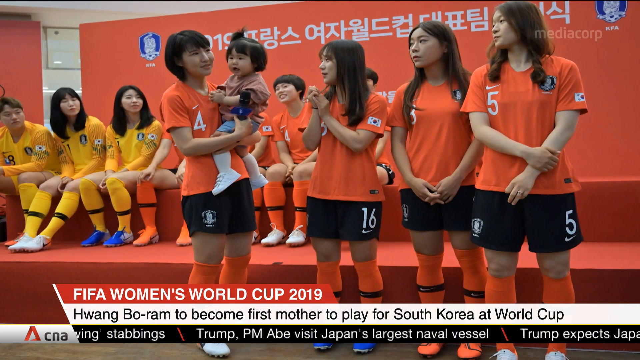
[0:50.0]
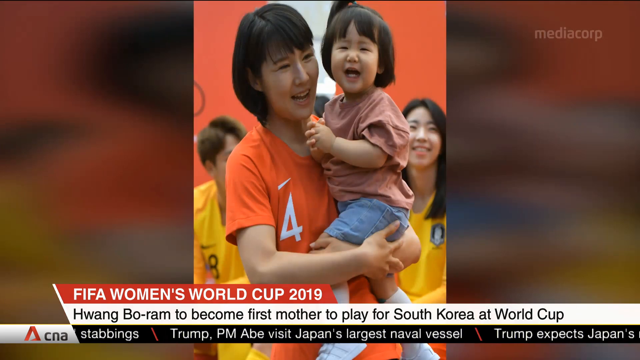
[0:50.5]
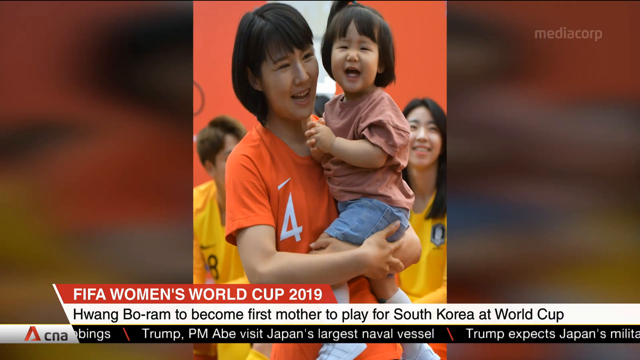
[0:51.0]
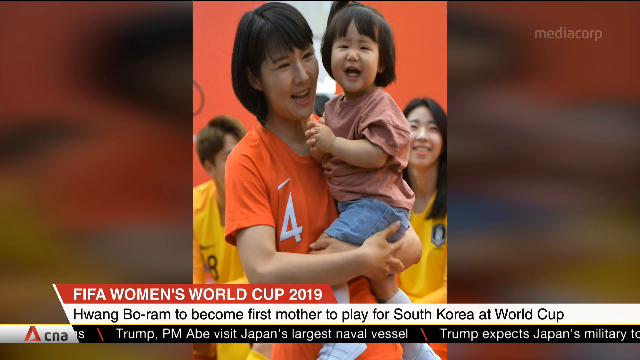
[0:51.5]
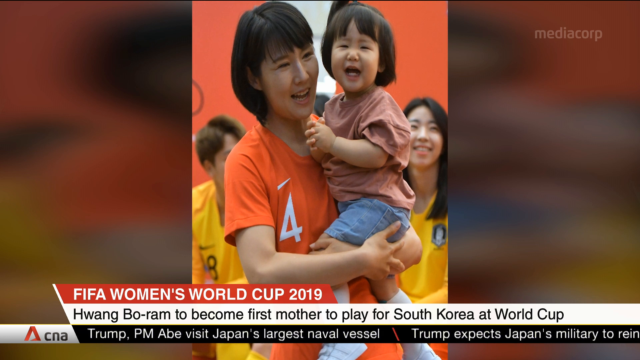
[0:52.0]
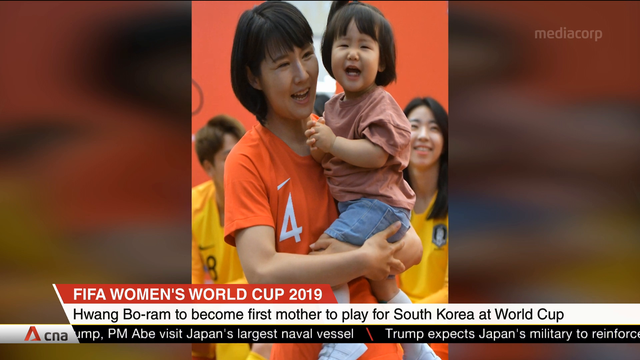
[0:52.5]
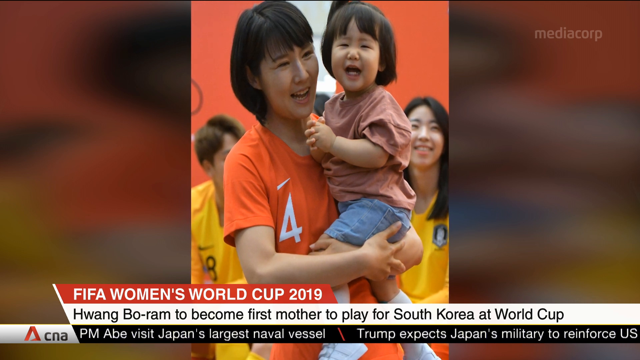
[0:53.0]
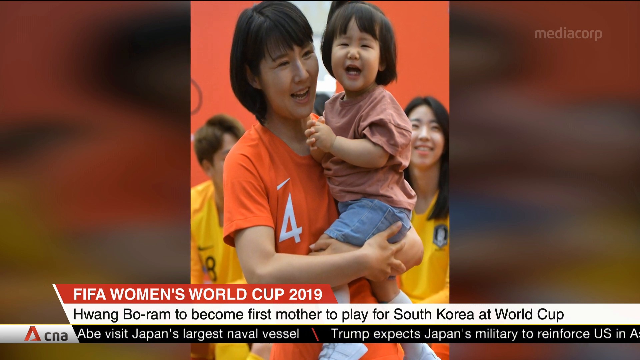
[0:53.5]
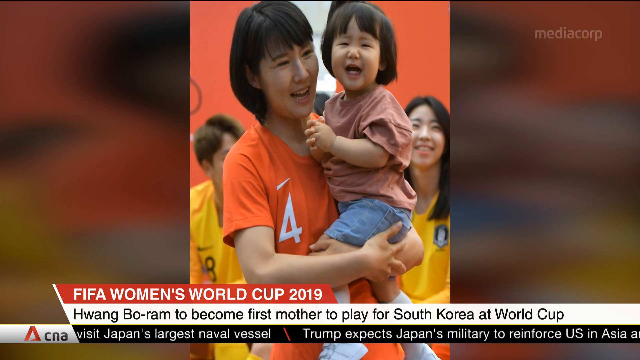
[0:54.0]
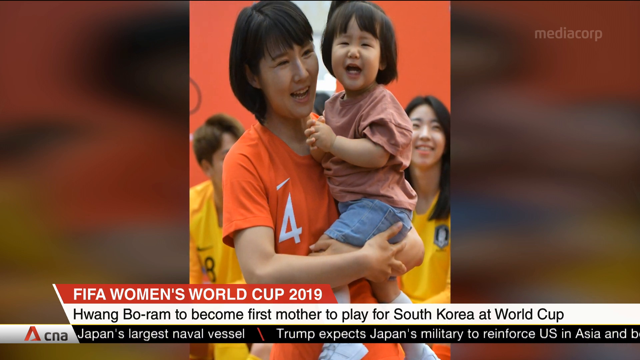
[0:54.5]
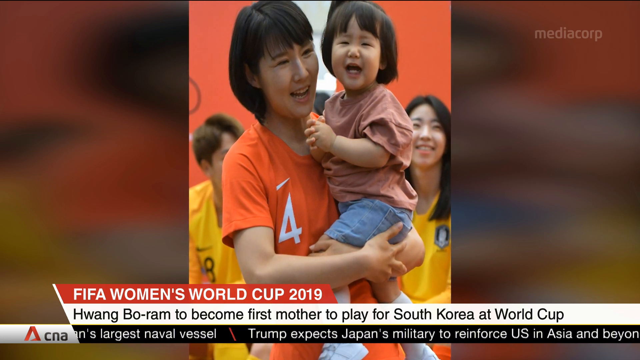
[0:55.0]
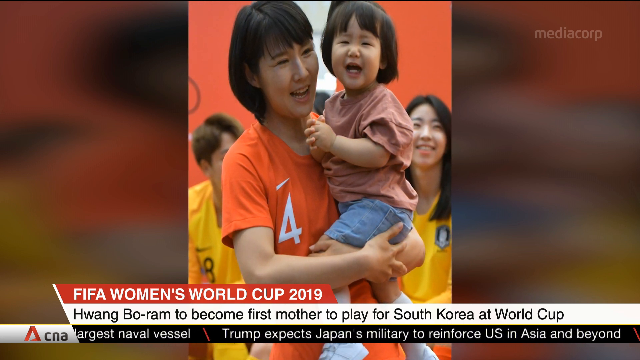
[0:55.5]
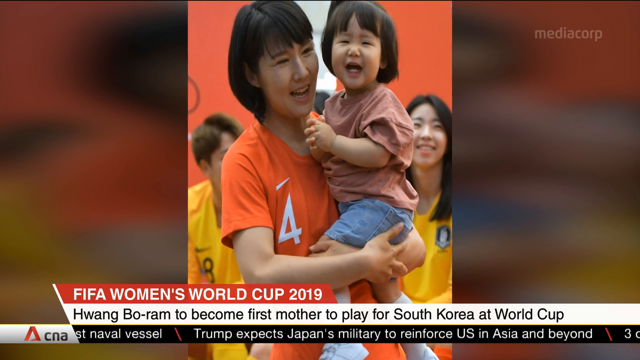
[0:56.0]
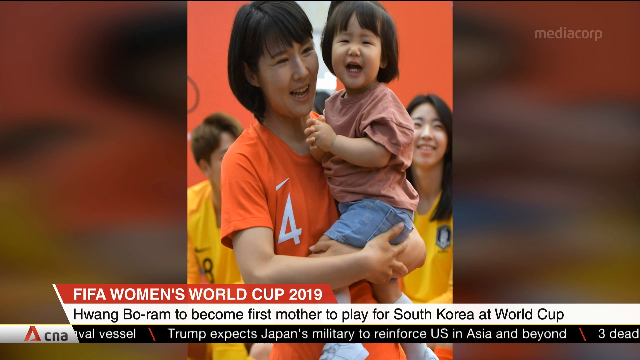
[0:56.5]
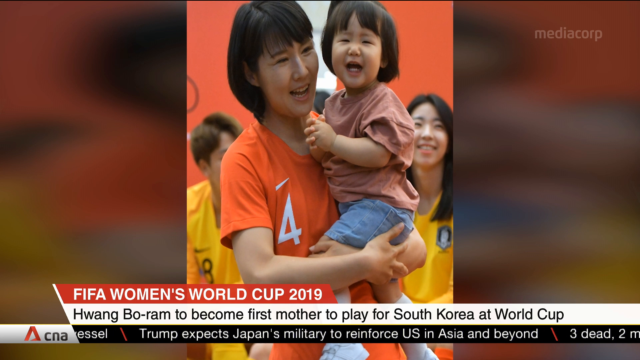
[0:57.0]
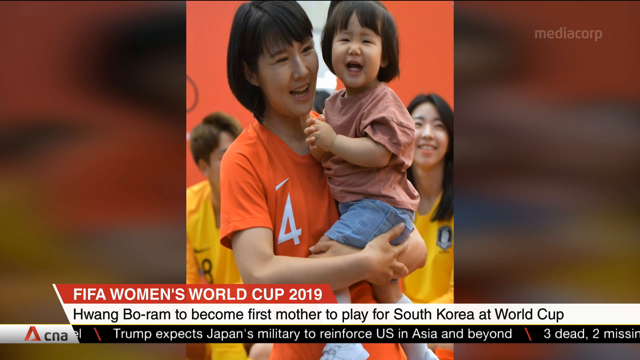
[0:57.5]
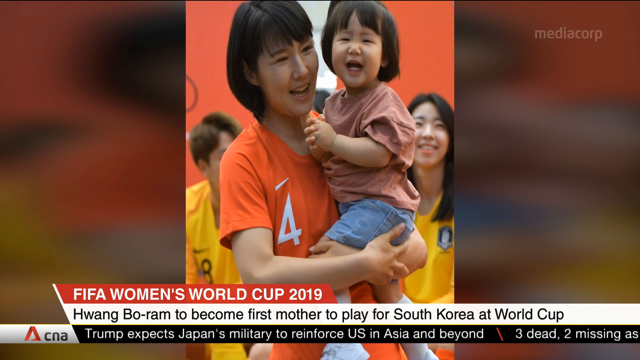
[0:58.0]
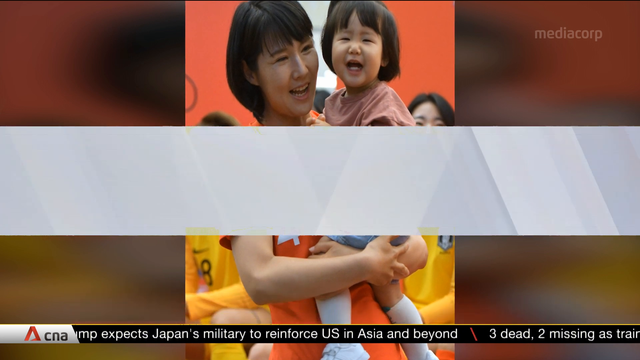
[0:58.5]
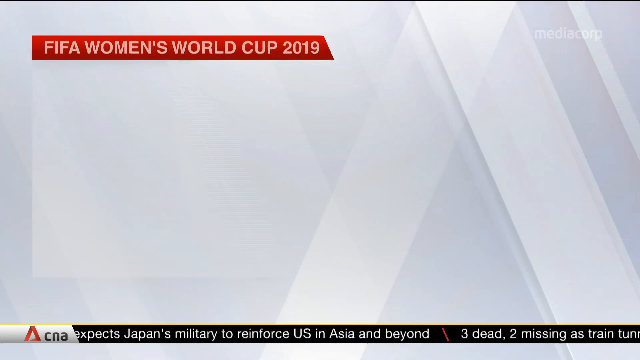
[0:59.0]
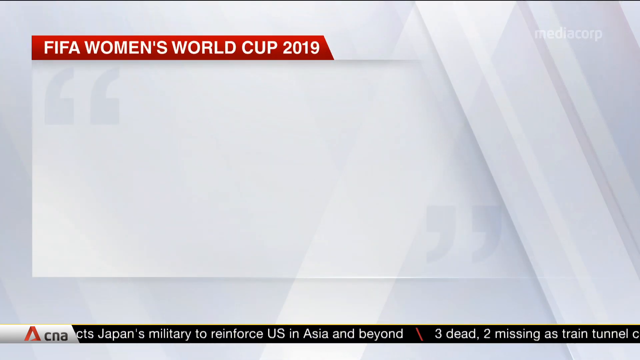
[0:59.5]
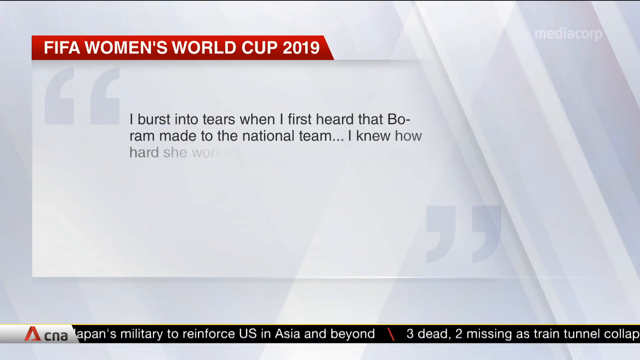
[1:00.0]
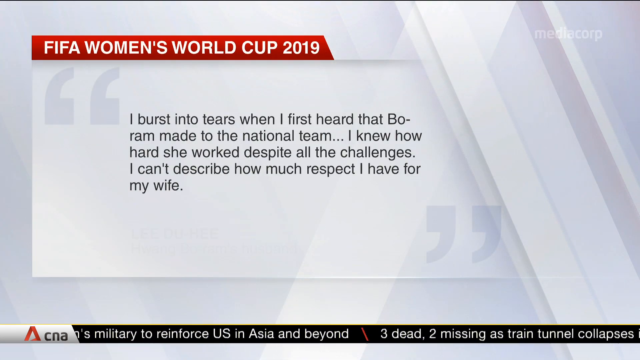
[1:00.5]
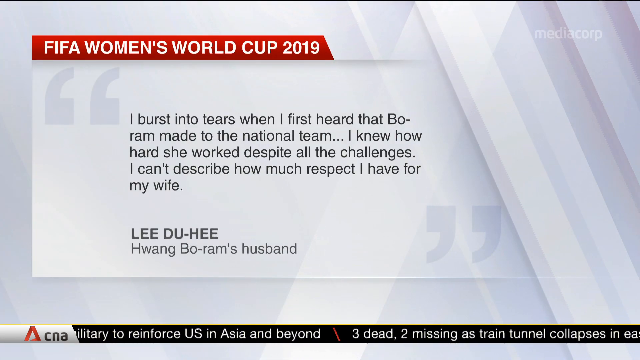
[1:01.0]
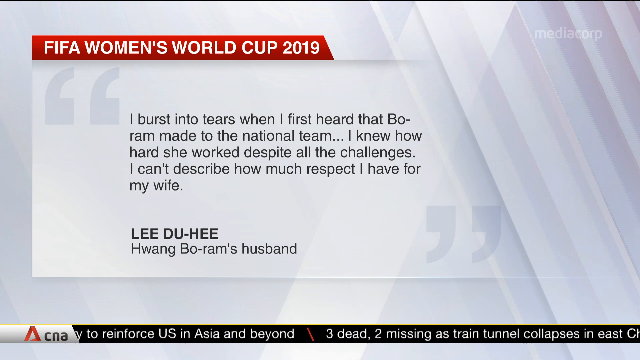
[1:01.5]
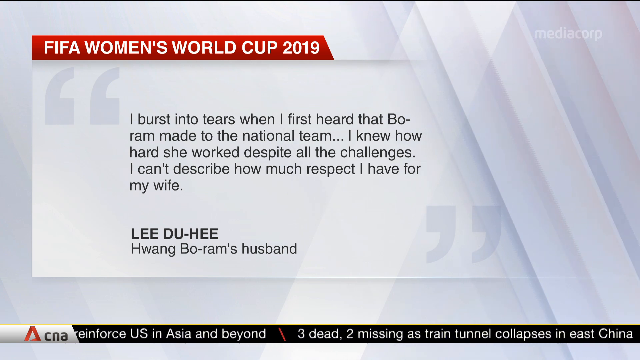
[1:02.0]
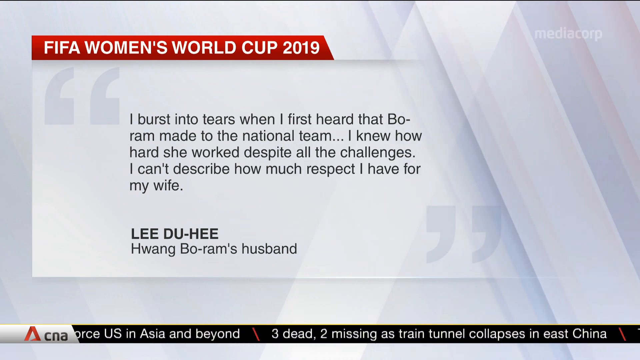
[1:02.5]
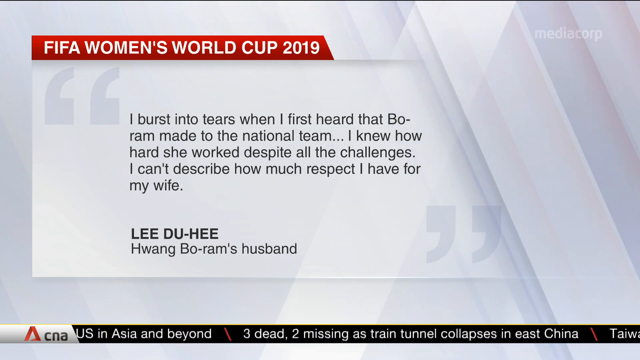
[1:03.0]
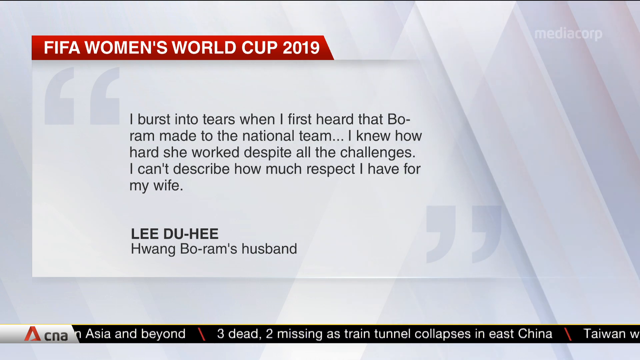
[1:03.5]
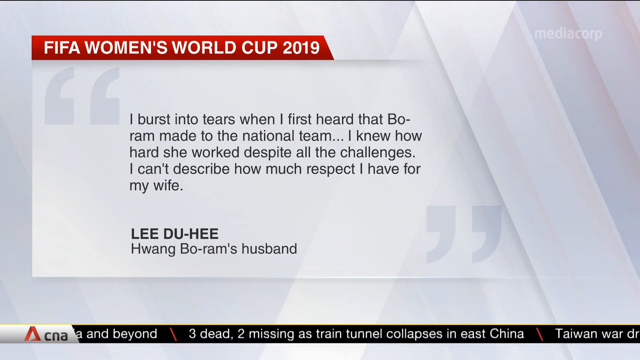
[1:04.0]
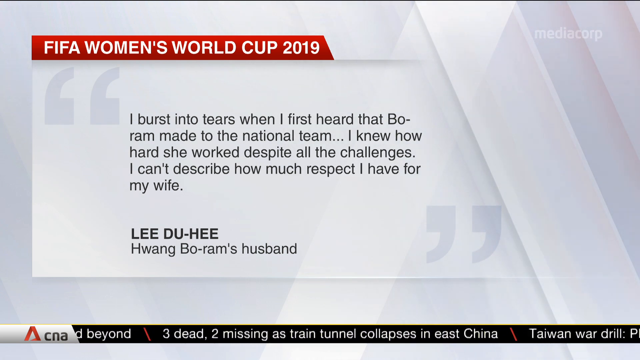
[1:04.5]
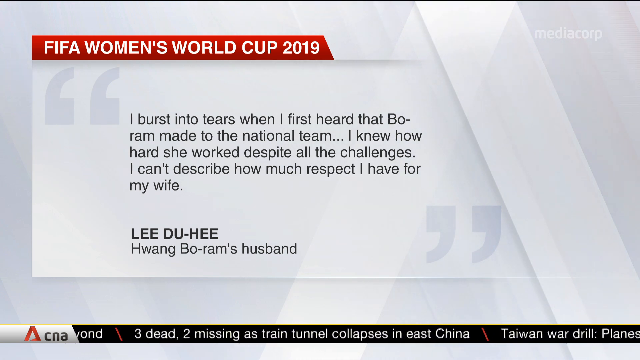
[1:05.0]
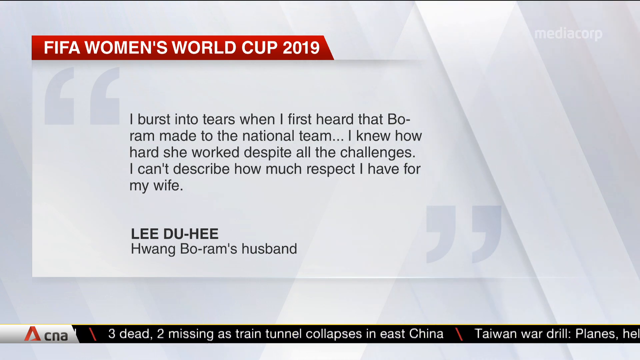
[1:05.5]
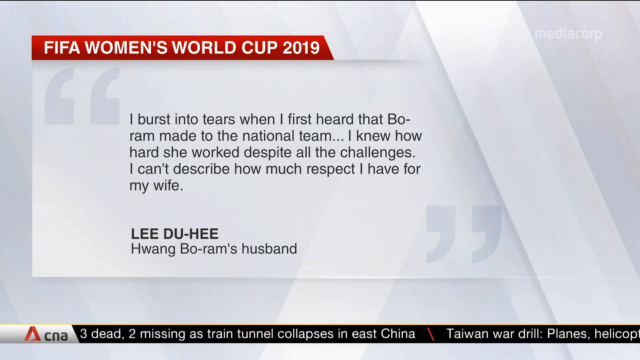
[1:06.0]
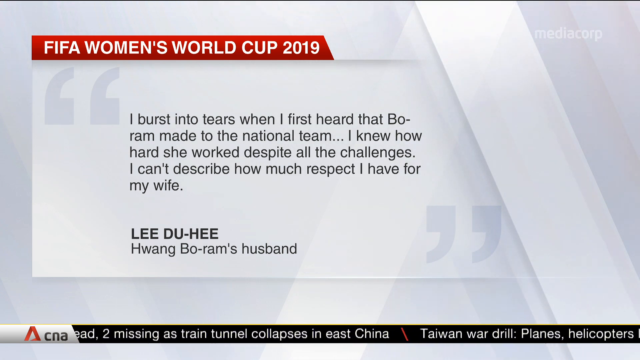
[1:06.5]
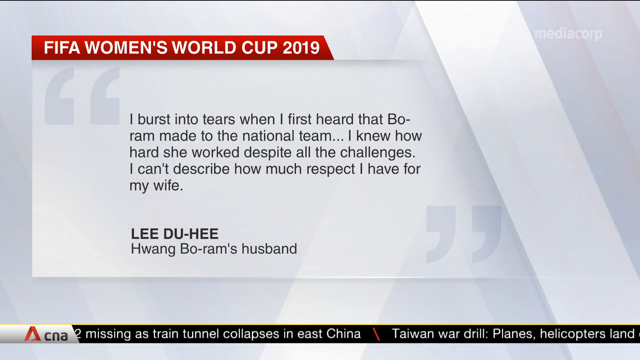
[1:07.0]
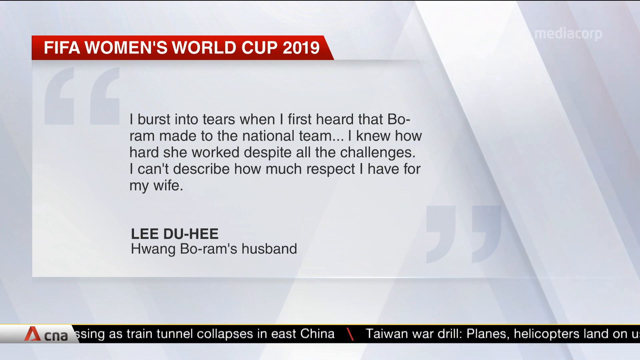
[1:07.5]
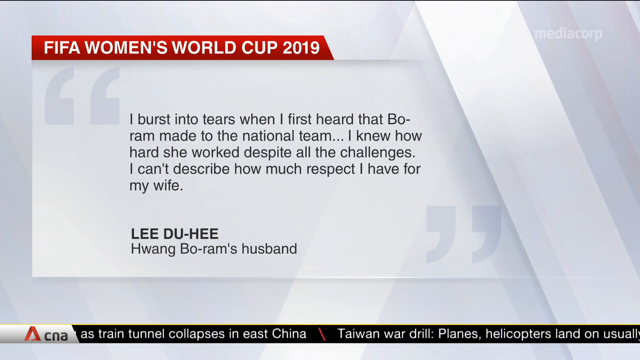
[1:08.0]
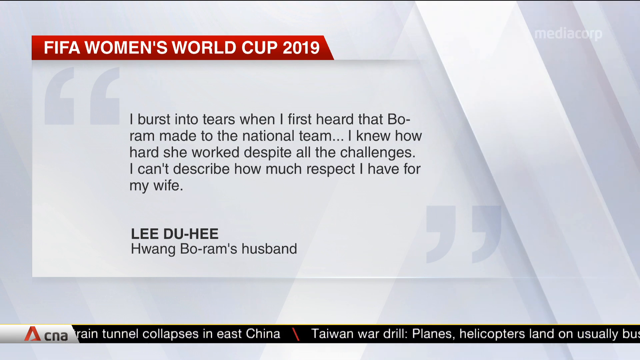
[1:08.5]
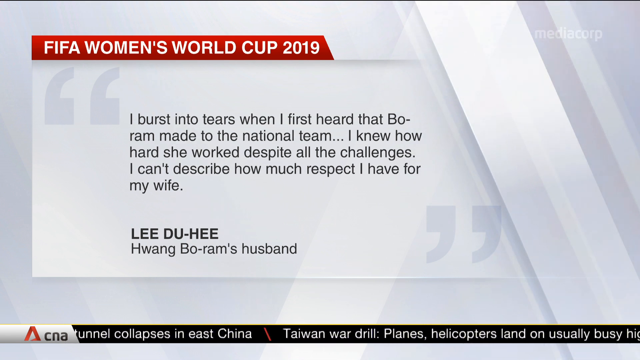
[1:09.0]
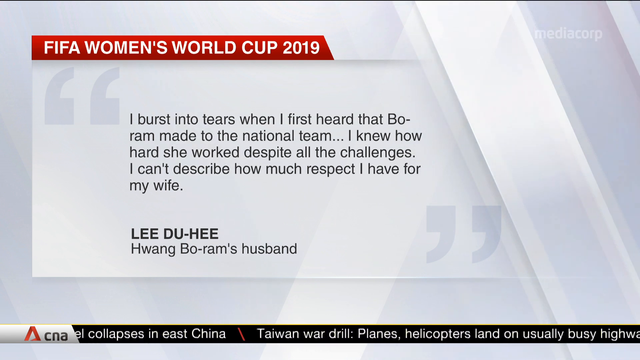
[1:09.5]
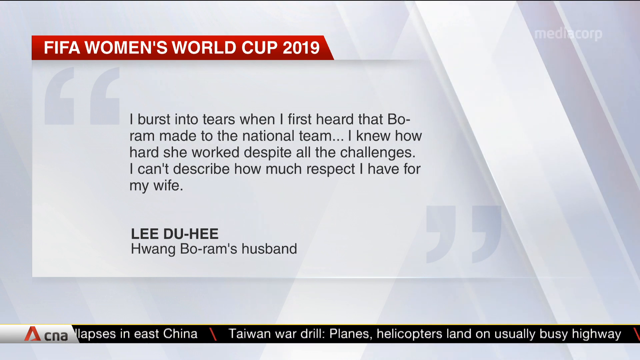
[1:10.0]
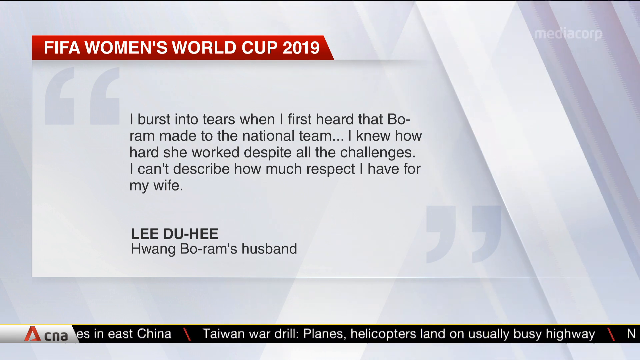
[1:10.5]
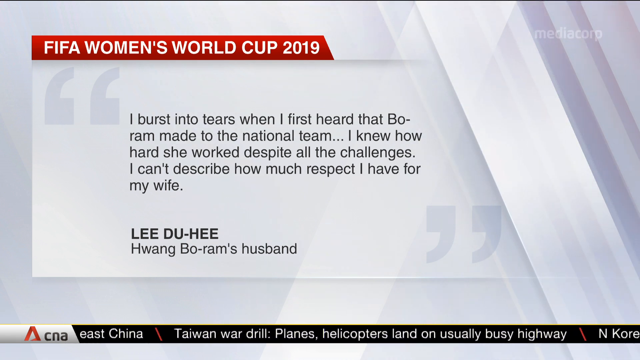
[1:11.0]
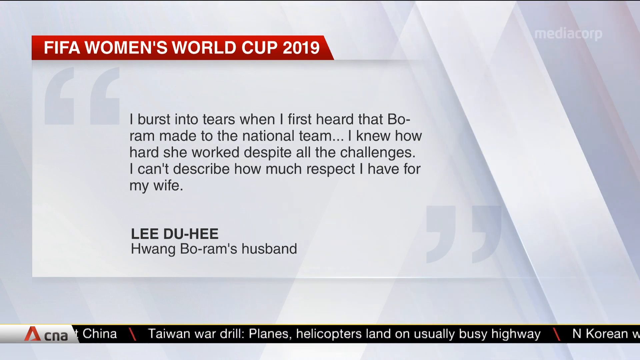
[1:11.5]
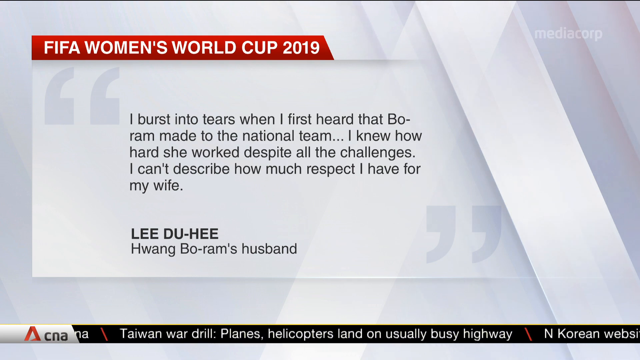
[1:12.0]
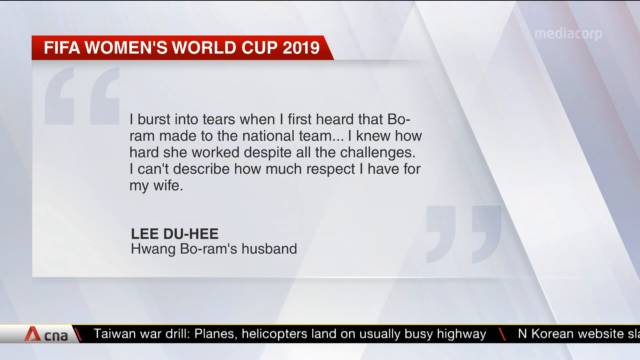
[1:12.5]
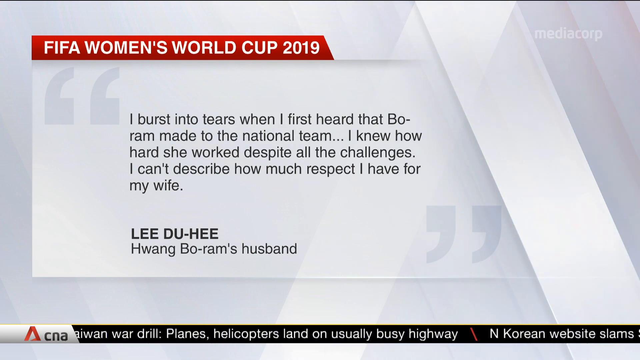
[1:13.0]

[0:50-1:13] A woman carrying a child appears on the screen. She wears orange and a dark shirt, seems happy, and has a microphone in her hands. A note then appears on the screen from Lee Dohee, who appears to be Boram's husband. It reads: "I burst into tears when I first heard that Boram made it to the national team, I know how hard she worked despite the challenges, I can't describe how much respect I have for my wife." The topic, FIFA Women's World Cup, is written at the top of the screen in white on a red background. At the bottom of the screen, several news headlines appear, such as "Taiwan war drill". The video suddenly ends with the note on the screen.